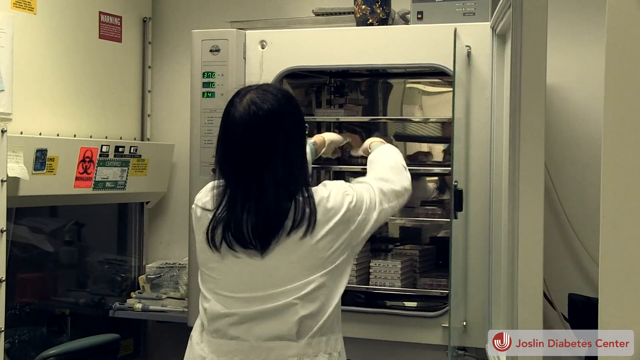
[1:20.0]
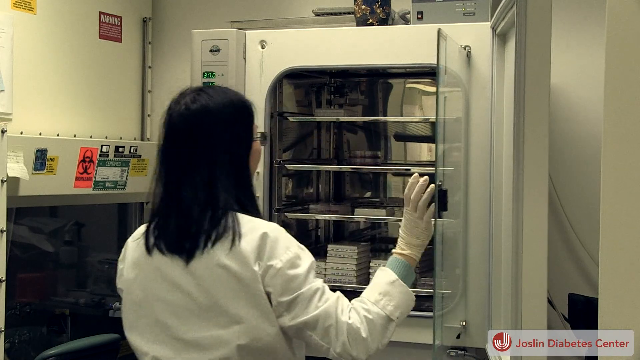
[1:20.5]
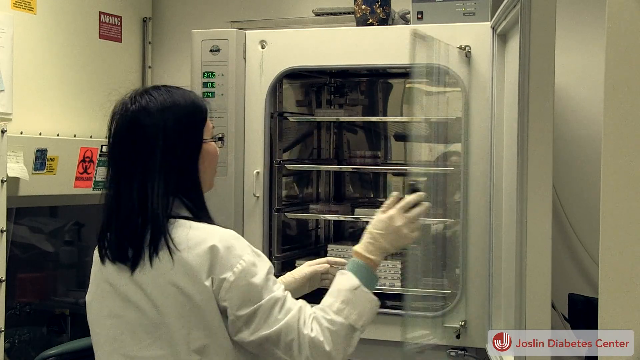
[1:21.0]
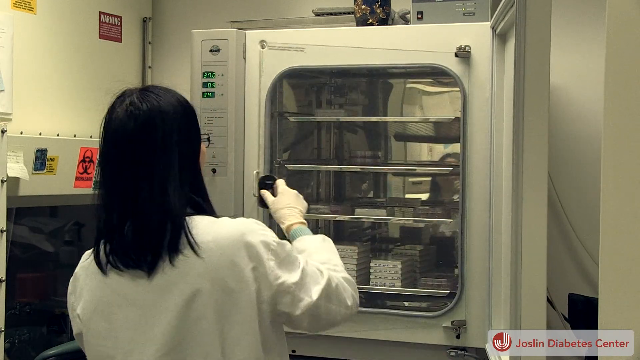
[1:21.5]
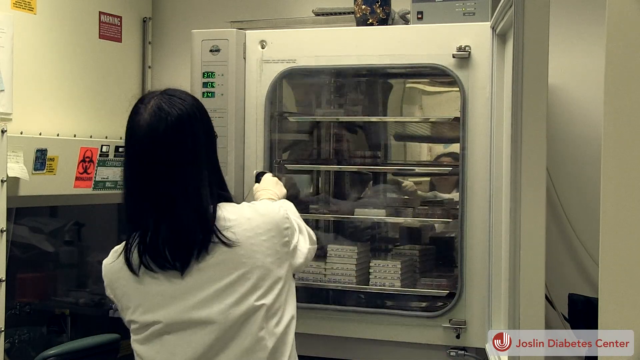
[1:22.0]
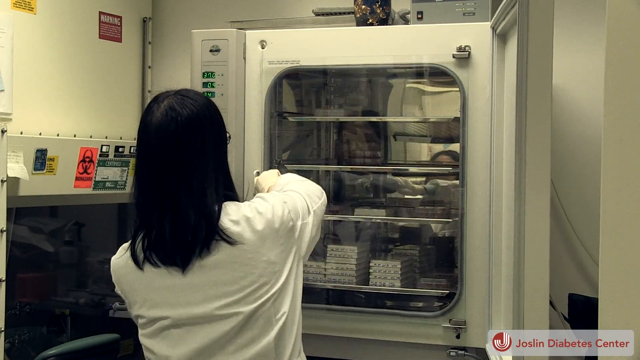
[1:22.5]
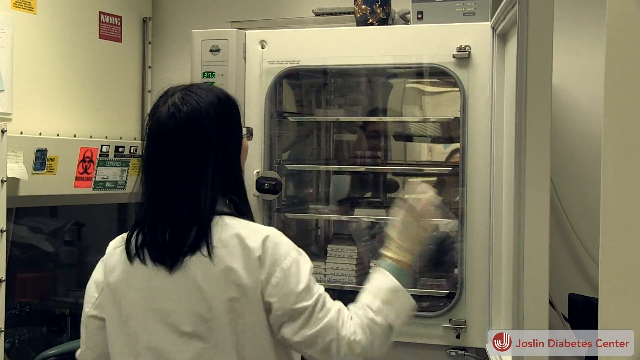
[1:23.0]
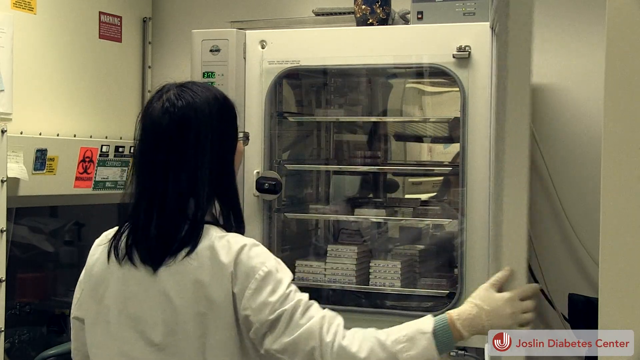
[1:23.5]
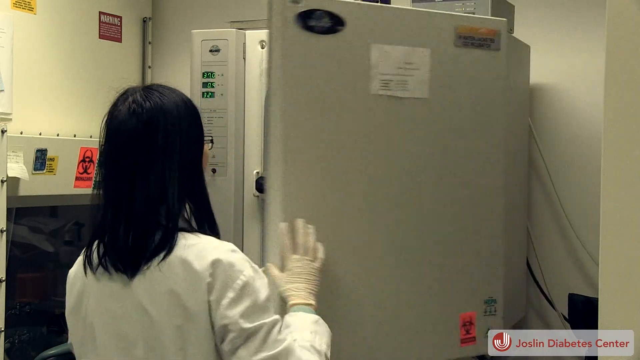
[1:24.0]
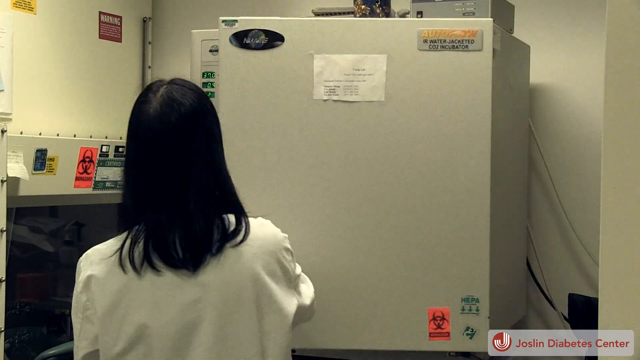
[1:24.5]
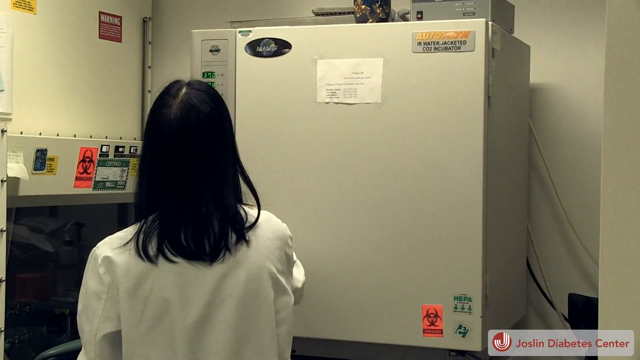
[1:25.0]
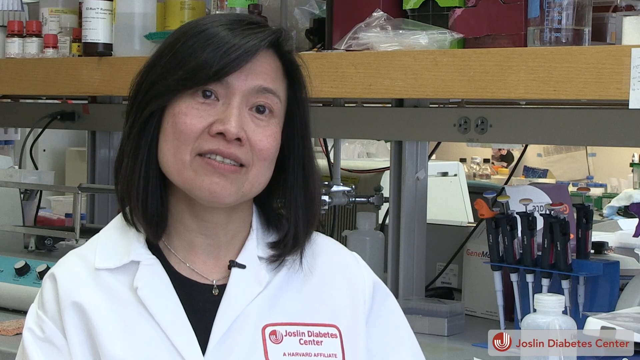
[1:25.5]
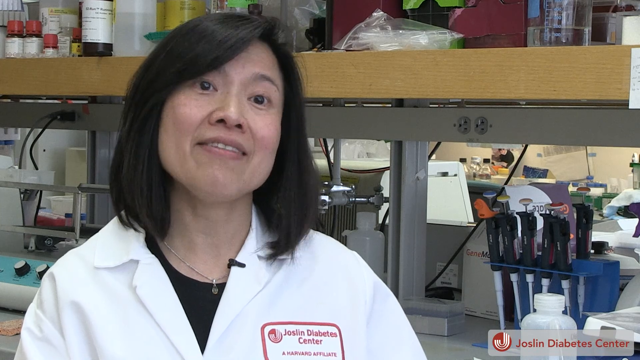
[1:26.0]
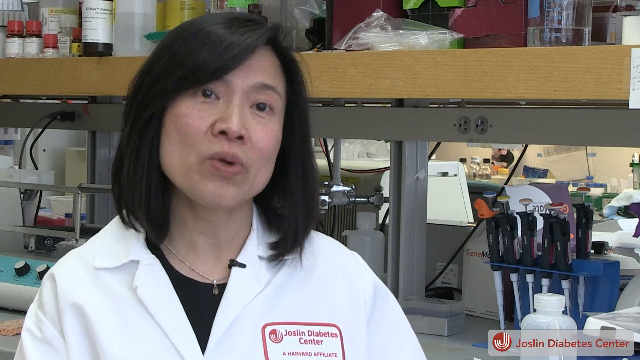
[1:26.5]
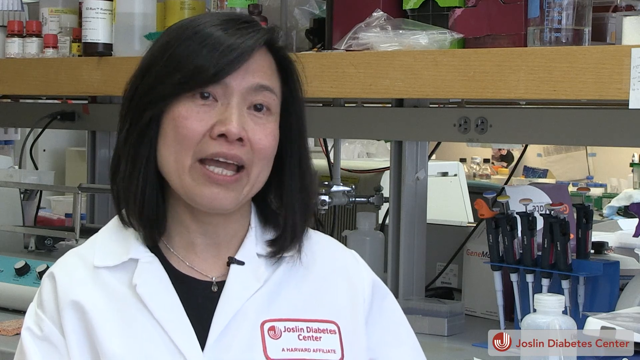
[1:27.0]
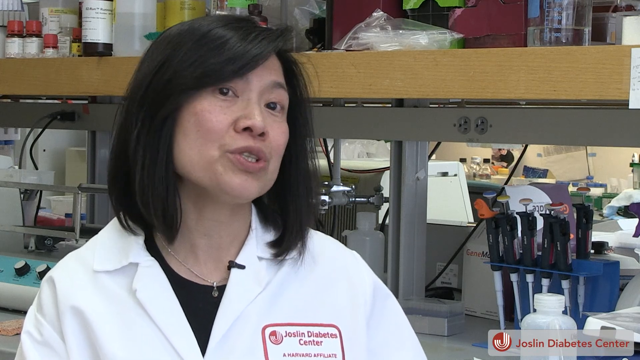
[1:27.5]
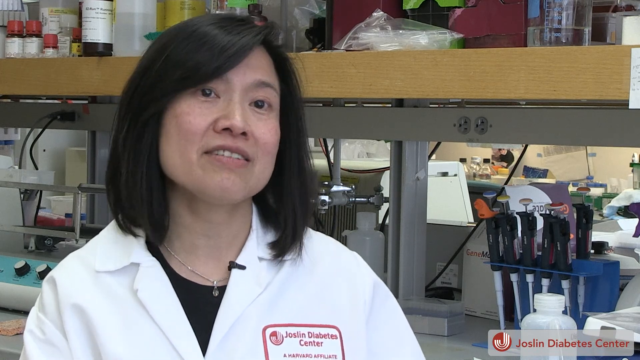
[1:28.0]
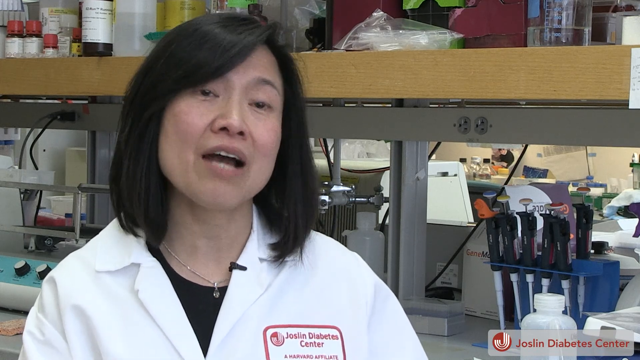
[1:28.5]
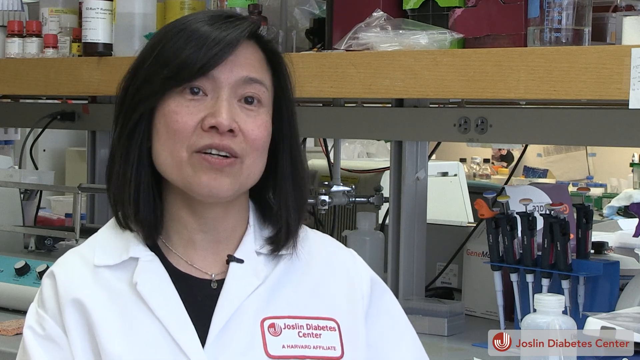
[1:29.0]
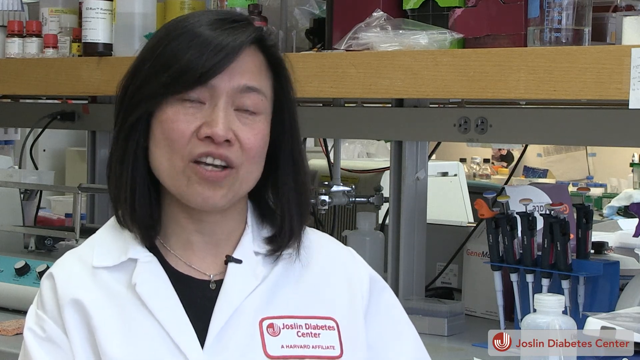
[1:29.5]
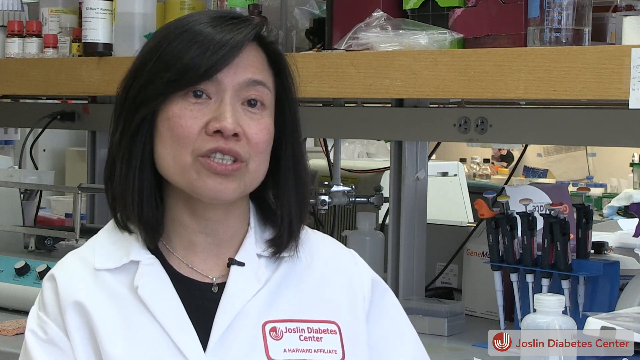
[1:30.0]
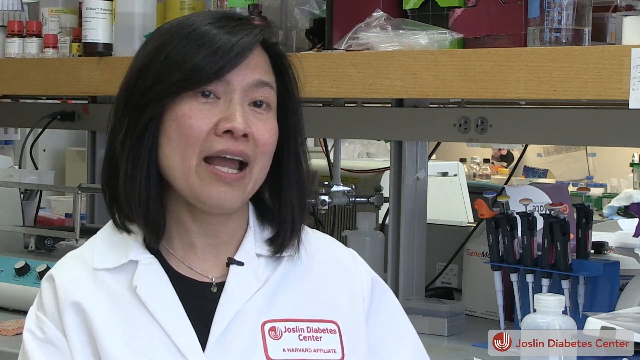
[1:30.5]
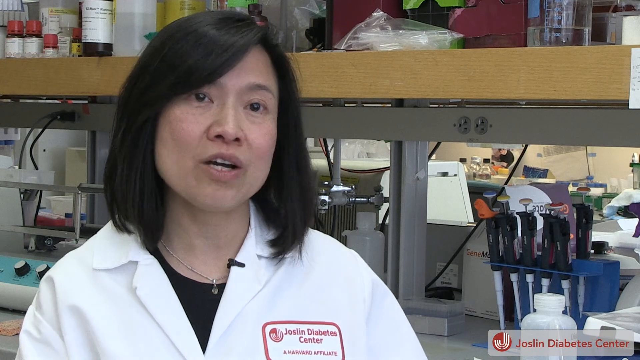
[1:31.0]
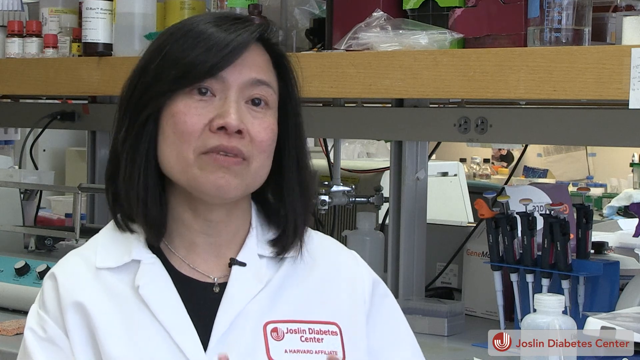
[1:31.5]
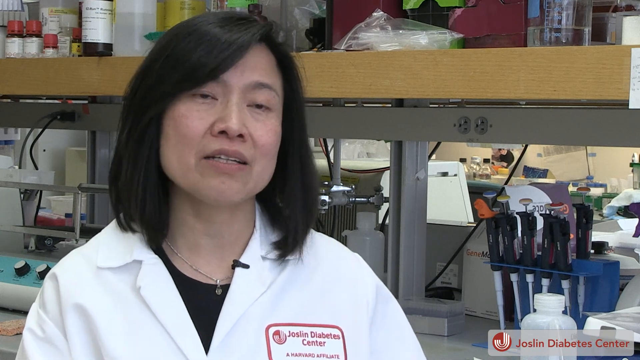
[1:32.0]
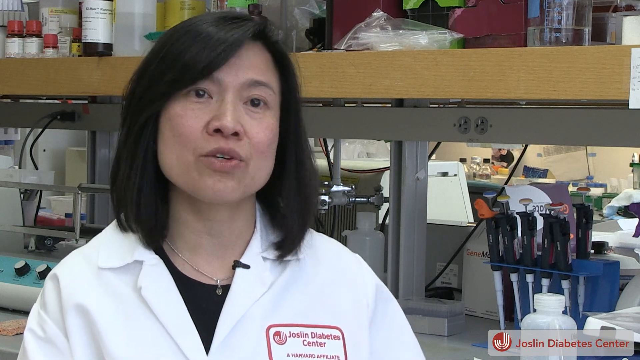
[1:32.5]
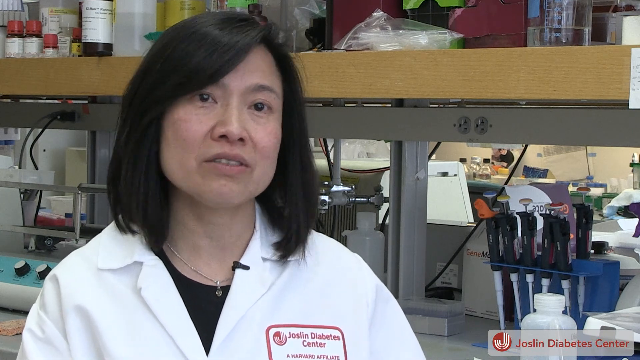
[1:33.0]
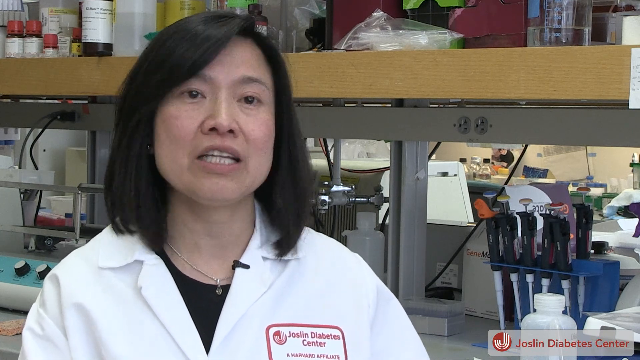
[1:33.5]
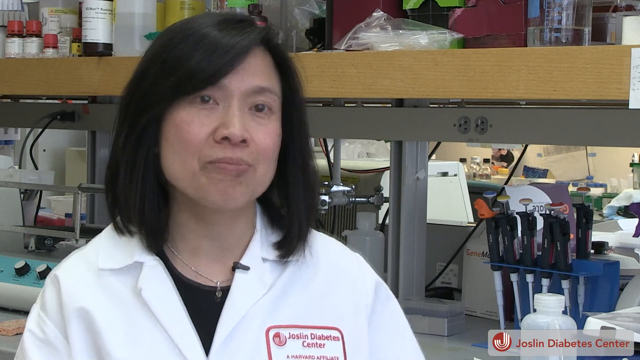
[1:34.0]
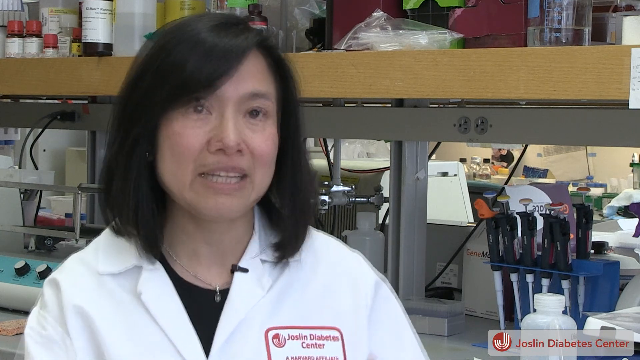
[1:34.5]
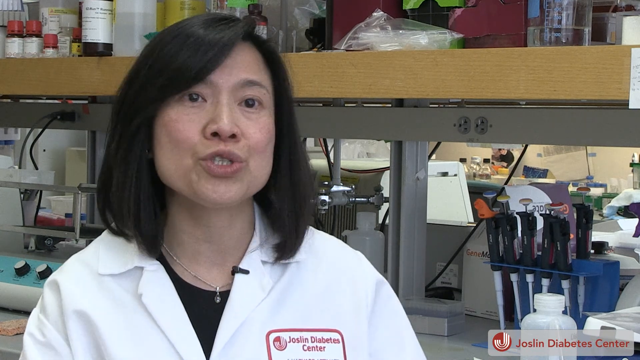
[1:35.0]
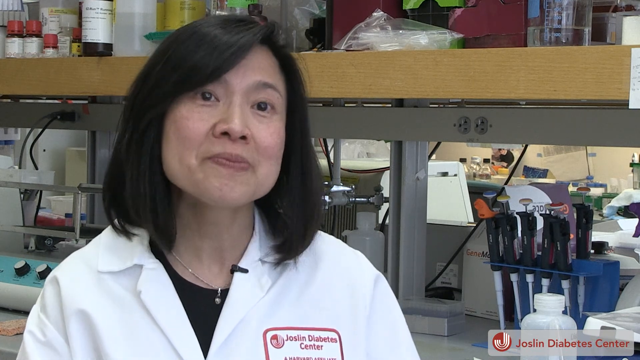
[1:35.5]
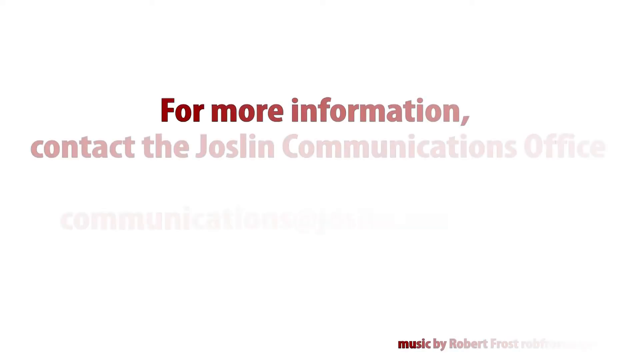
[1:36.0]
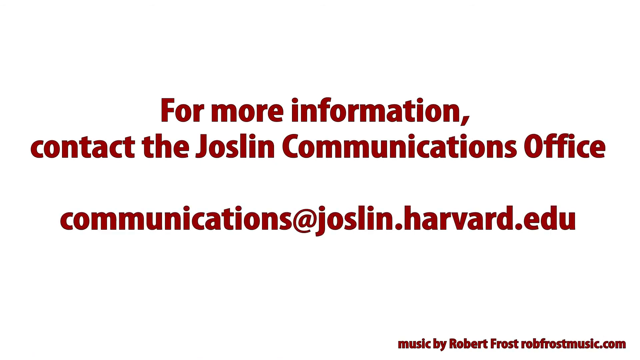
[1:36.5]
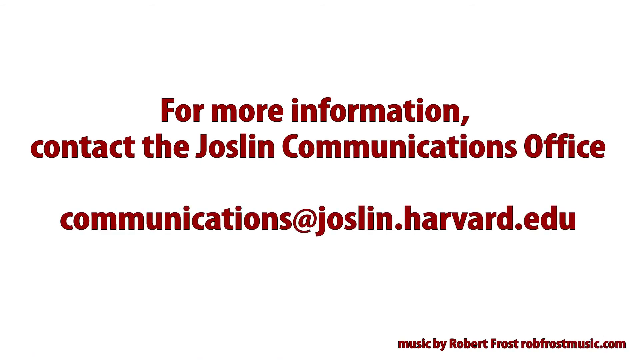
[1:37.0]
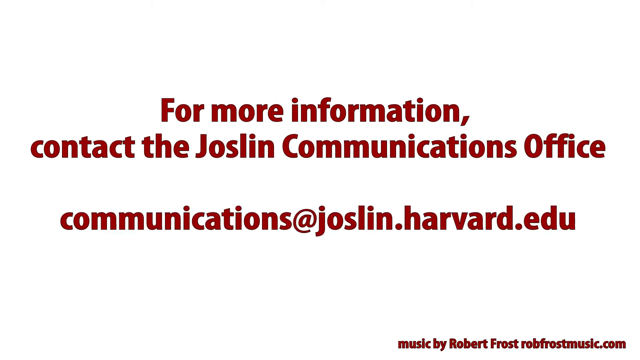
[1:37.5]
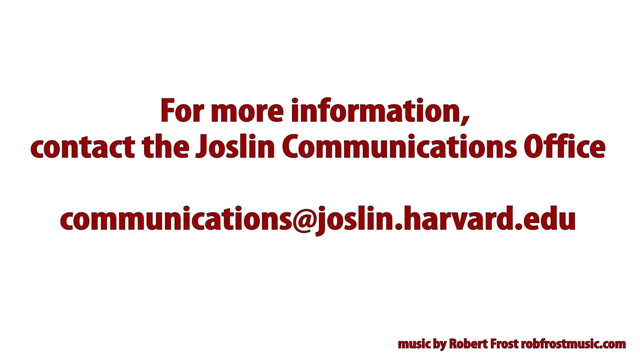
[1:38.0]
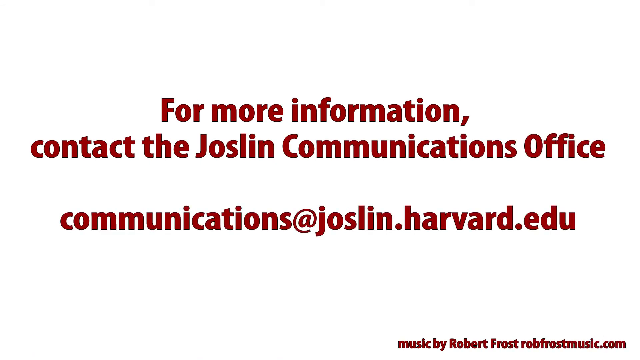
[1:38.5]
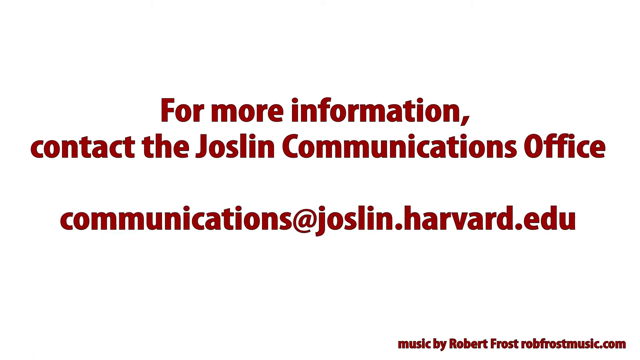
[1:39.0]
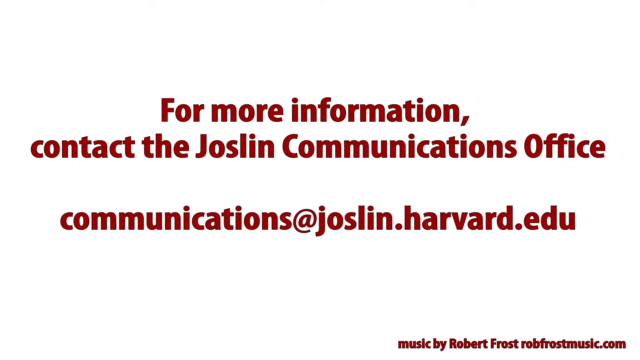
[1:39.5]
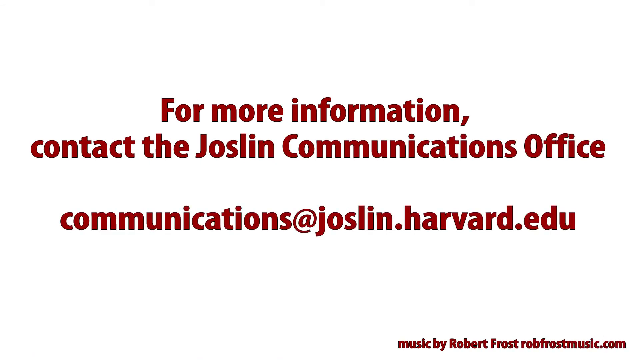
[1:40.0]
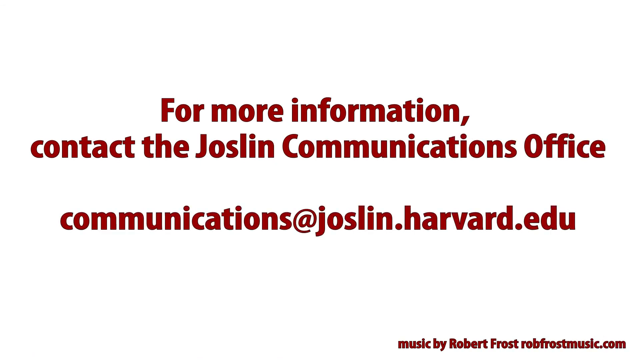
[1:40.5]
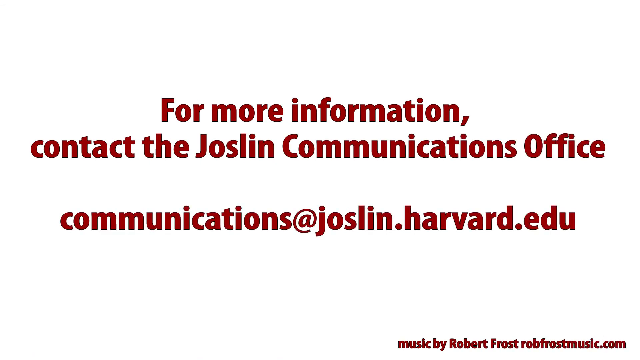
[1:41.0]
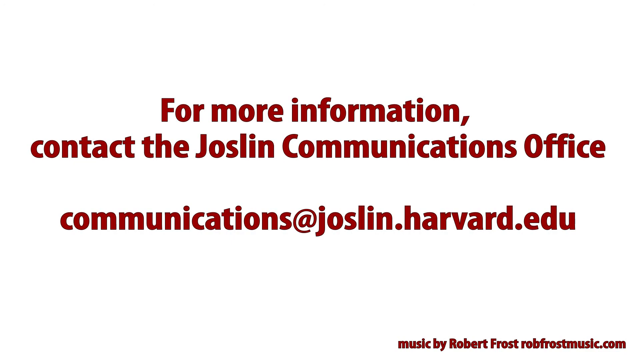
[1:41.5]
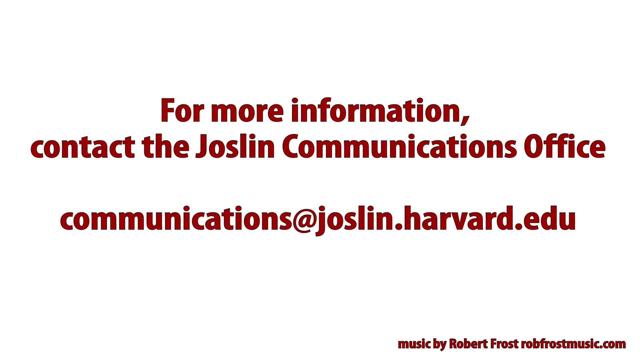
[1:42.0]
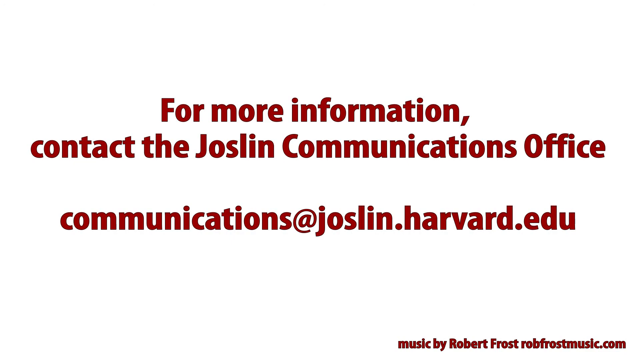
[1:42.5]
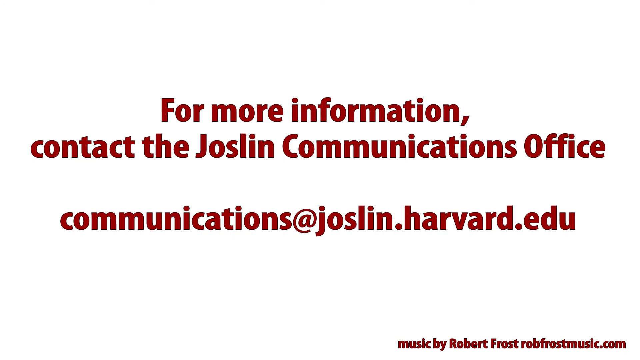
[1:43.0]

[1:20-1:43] A scientist in a white lab coat, with long untied black hair and white disposable gloves, uses both hands to place a flat glass petri dish containing a dark pink liquid into the second-from-the-top rack of a chamber, which may be an incubator. She closes the chamber's glass door with her right hand and twists the knob to secure it, then closes an opaque door over the glass door with her right hand to finish closing the chamber. Next is an interview with a female scientist who speaks quite enthusiastically, gesturing with both hands. Finally, a blank page with a white background shows red text reading "For more information, contact the Joslin Communications Office", with their email shown below it.